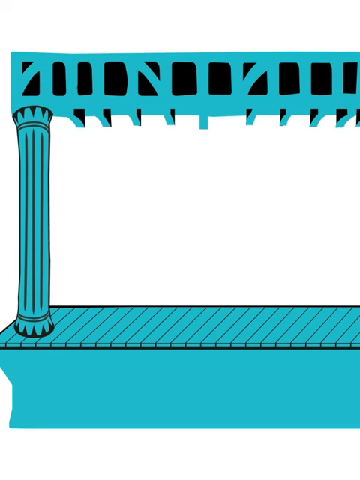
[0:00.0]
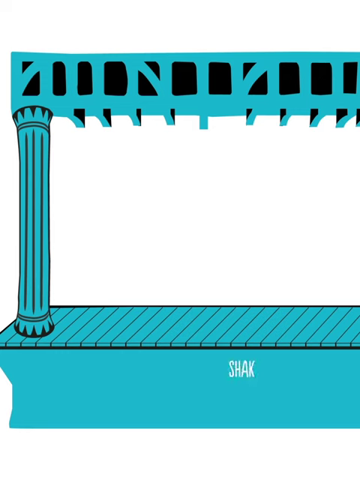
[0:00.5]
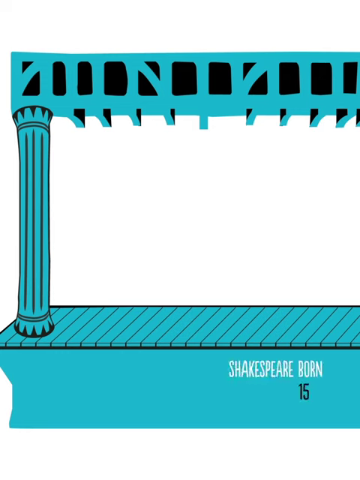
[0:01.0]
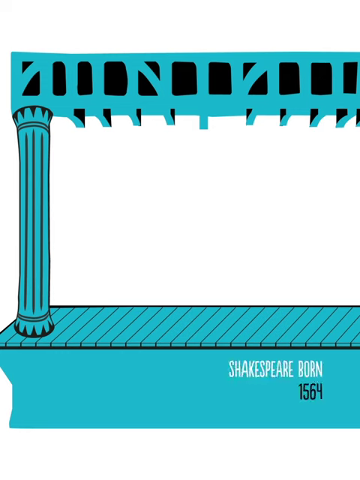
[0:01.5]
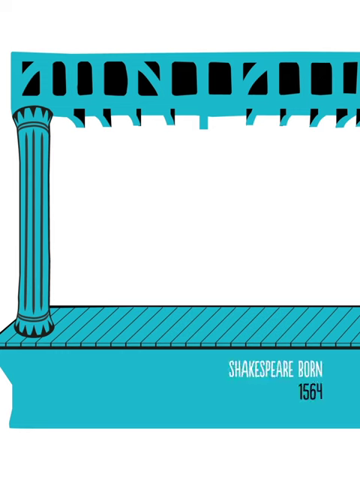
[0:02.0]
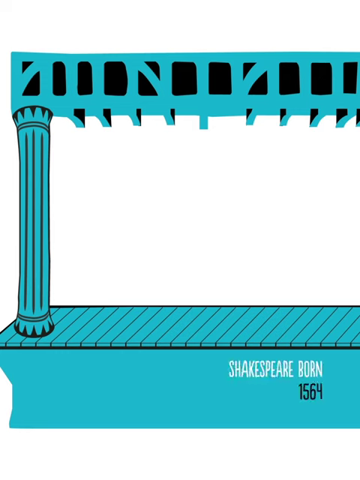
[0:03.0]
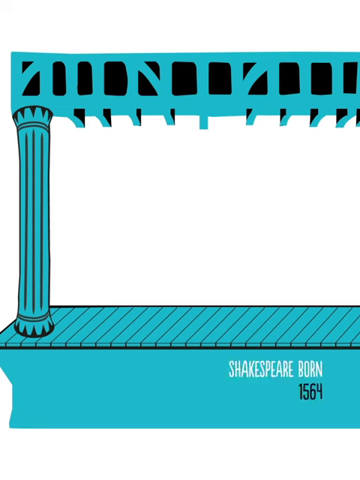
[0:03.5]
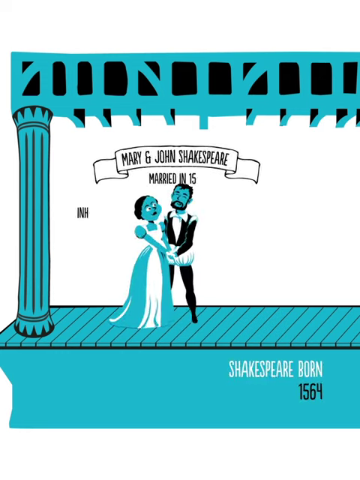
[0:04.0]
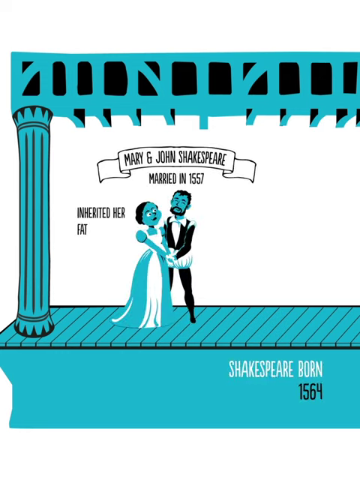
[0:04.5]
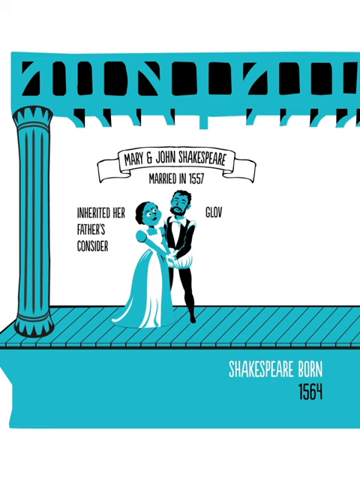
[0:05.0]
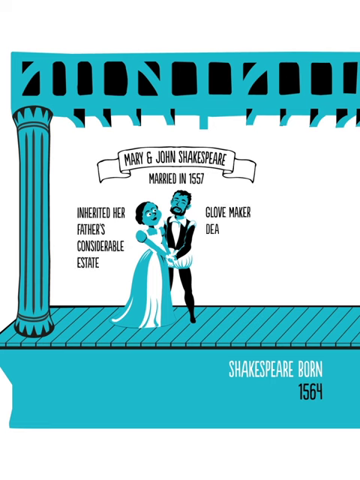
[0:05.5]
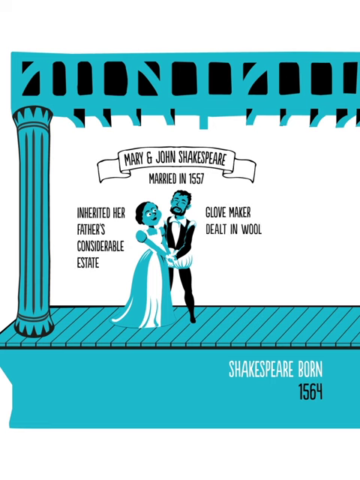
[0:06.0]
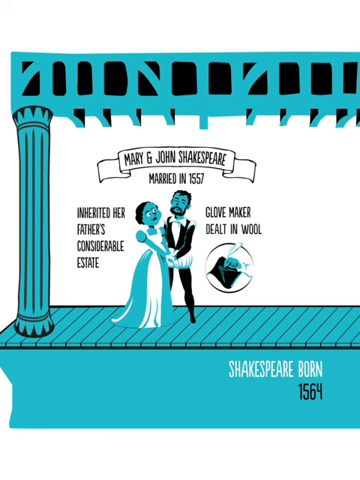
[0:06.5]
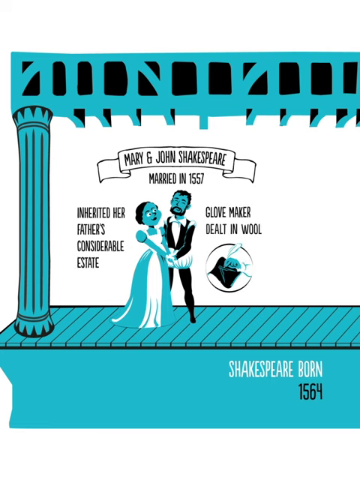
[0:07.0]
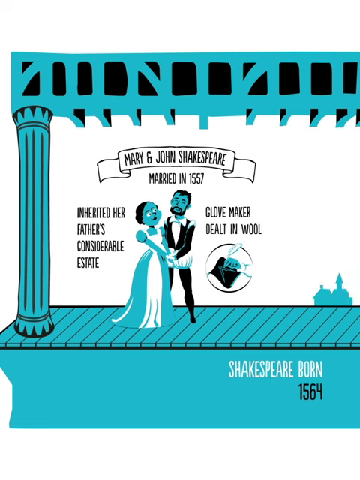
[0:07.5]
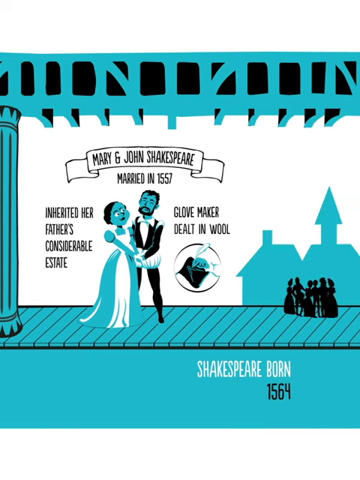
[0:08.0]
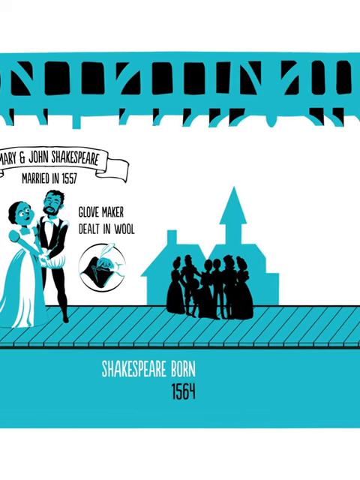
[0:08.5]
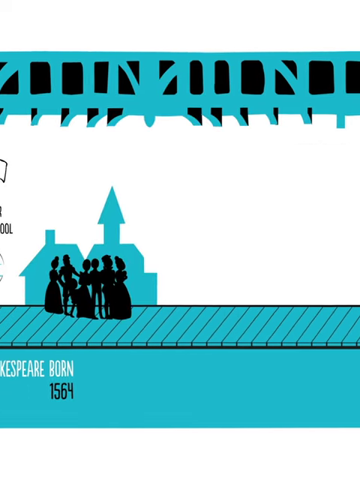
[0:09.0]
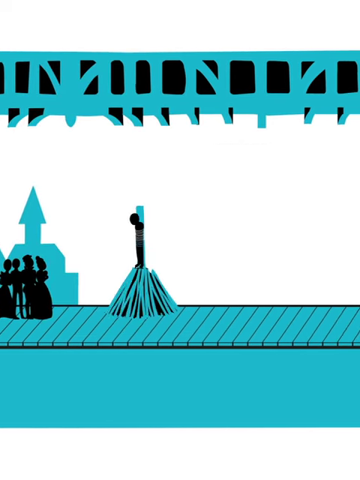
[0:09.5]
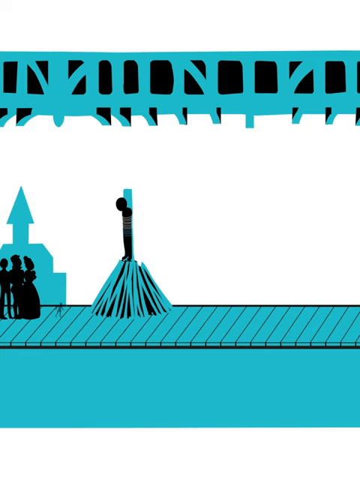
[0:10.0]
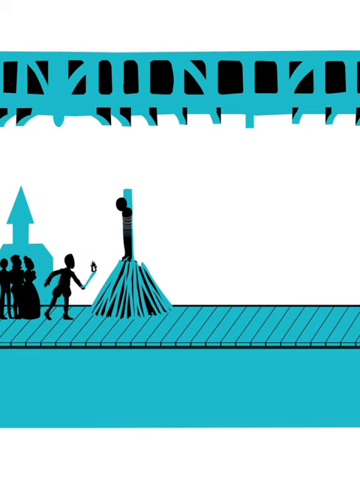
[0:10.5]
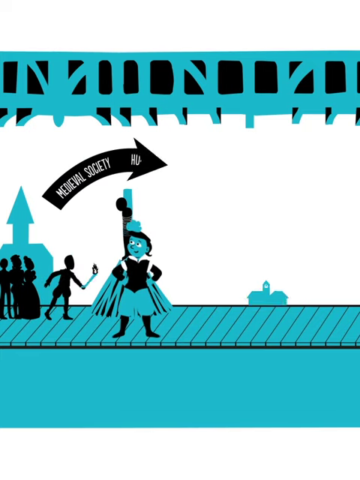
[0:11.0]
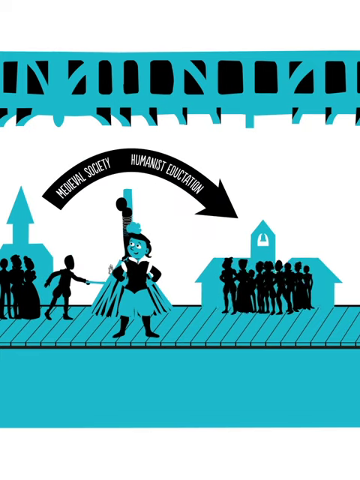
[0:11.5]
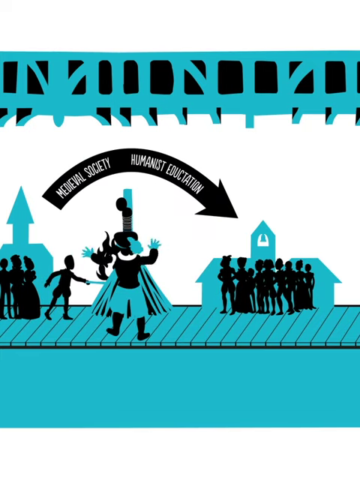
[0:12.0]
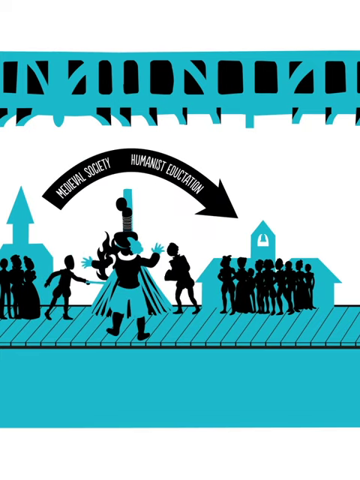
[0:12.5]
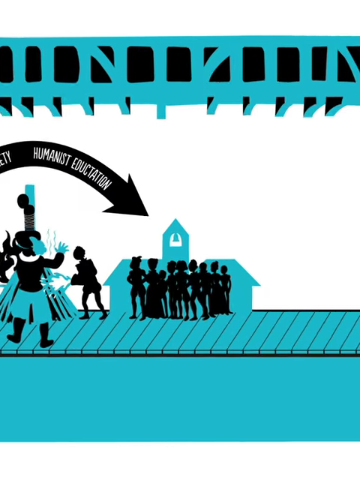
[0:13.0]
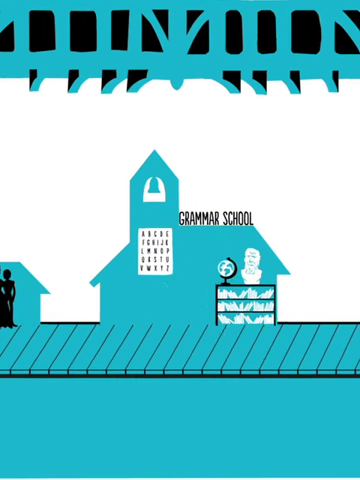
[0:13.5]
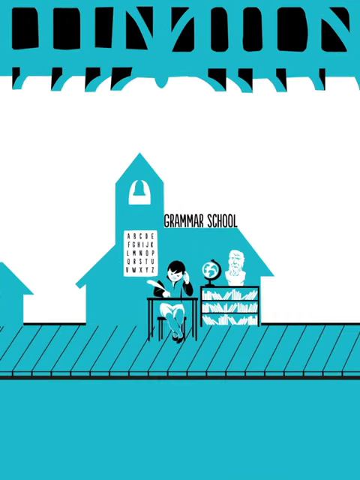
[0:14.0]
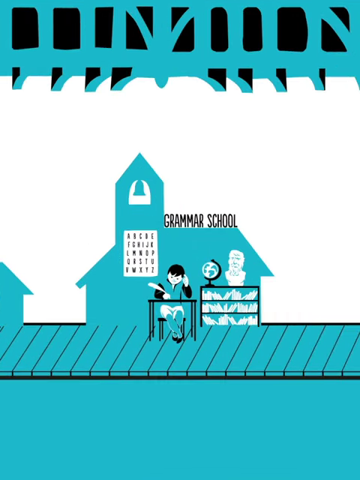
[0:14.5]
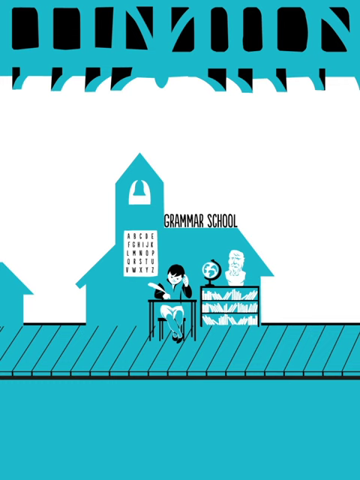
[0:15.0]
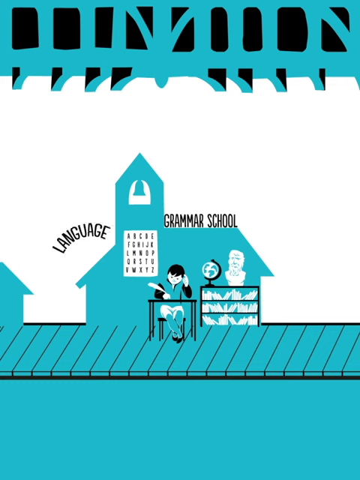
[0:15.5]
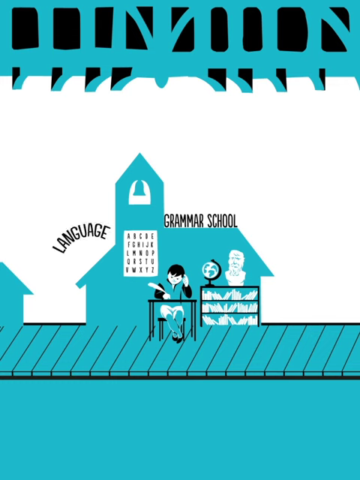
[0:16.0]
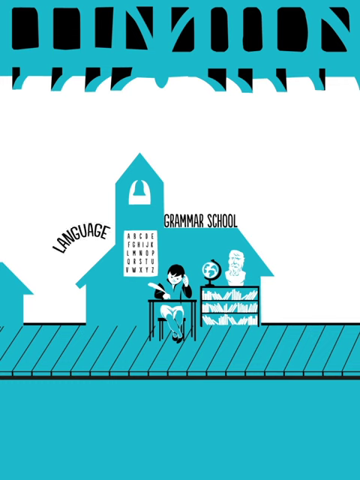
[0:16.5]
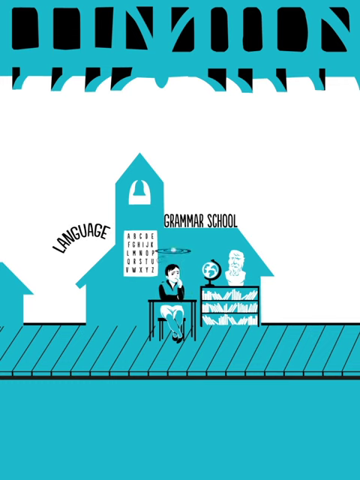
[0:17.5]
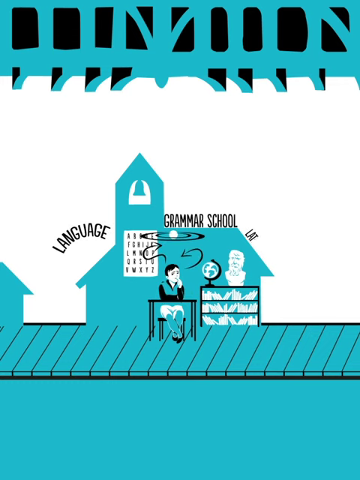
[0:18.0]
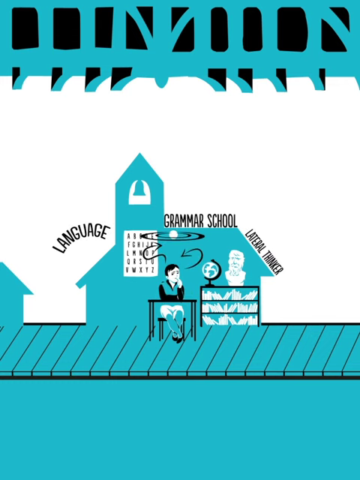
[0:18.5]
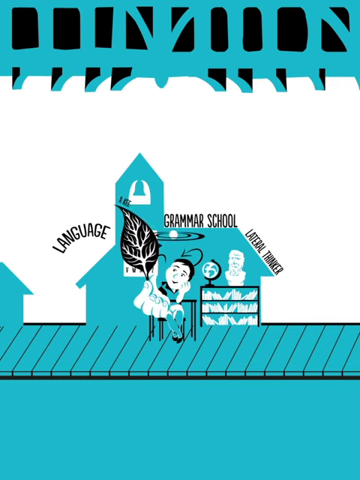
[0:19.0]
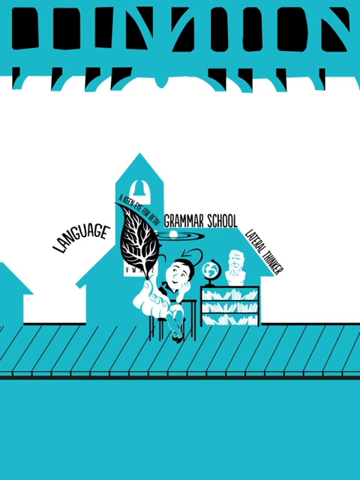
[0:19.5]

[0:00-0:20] This animated video shows scenes from the life of William Shakespeare. The background is blue and looks like a stage, with a column on the left and a roof above it, all in blue. Scenes depicting moments in Shakespeare's life appear on the stage. "Shakespeare Born 1564" appears on the front of the stage. A graphic of a man and a woman then appears on the stage, and above it a ribbon banner reads "Mary and John Shakespeare married in 1557." The texts "Inherited her father's considerable estate" and "Glove maker, dealt in wool" appear around the couple. As the camera moves down the stage, a new graphic appears next to it: a silhouette of a group of people in black, with a blue silhouette of buildings behind them. Next comes a silhouette of a person strapped to a stake and someone holding a torch, about to set the person on fire. A curved black arrow appears around the top of this, reading "Medieval Society, Humanist Education," as the image of a young boy in Renaissance clothing appears in front of it. The arrow points to a blue silhouette of a building with a church steeple that has a bell in it, and black silhouettes of a group of people stand in front of the building. A new blue silhouette of a building with a bell tower then appears, with the words "Grammar School" written above the roof. In front of it is what looks like a bookcase with a globe and the bust of someone, and a young boy sits at a desk writing with a quill pen. The words "Language" and "Lateral Thinker" appear as the boy holds up what looks like a large leaf in front of him.